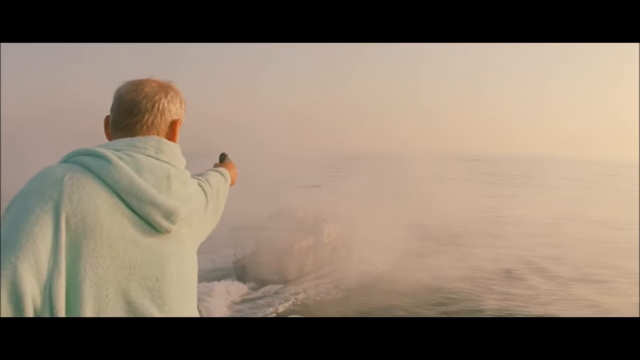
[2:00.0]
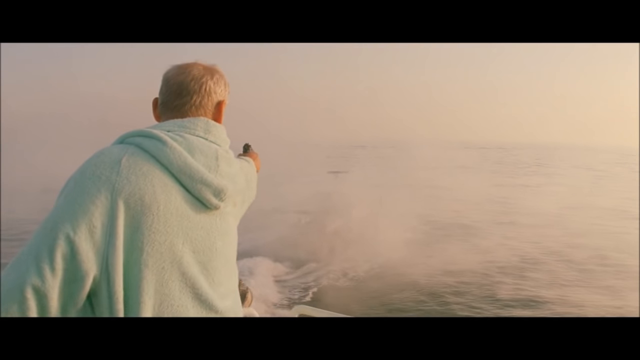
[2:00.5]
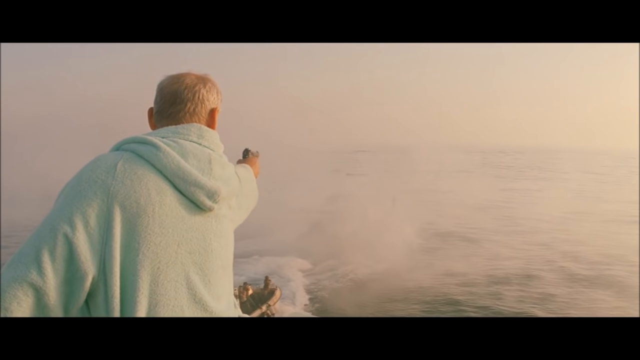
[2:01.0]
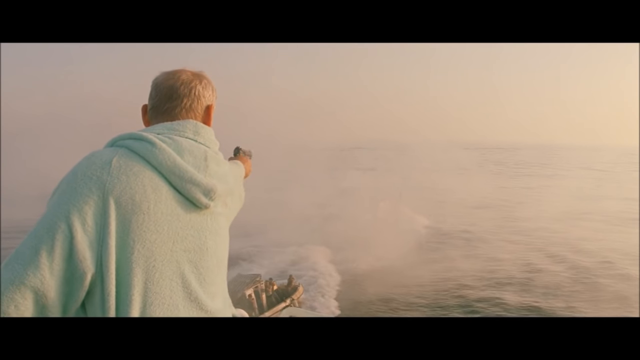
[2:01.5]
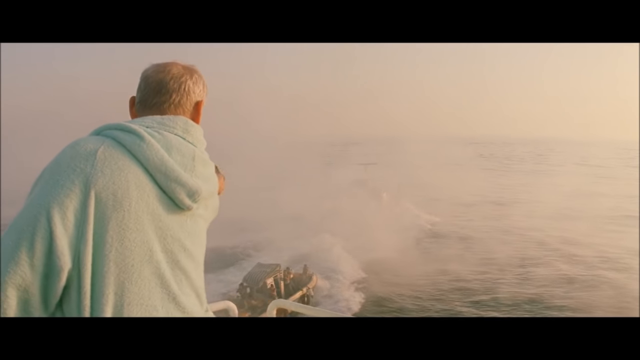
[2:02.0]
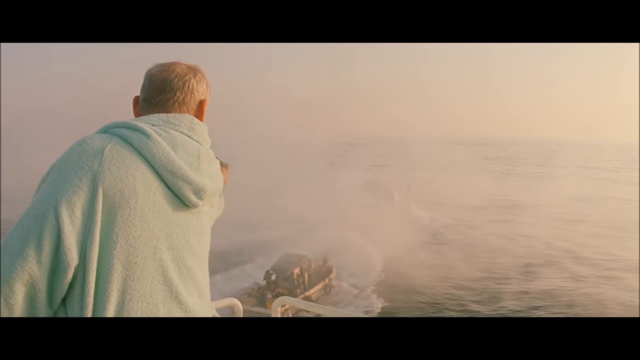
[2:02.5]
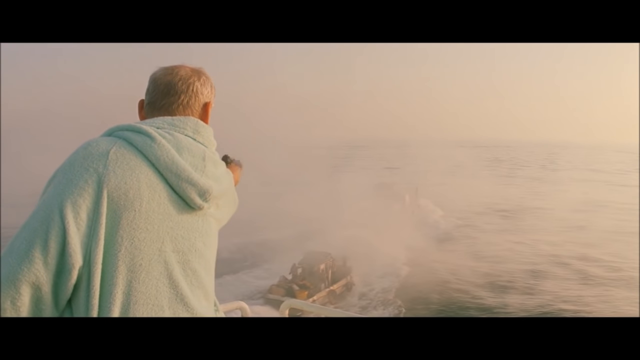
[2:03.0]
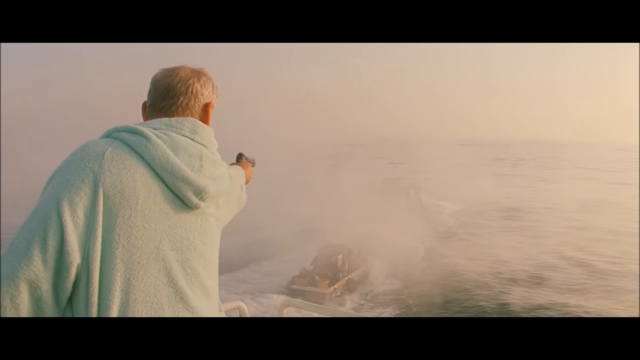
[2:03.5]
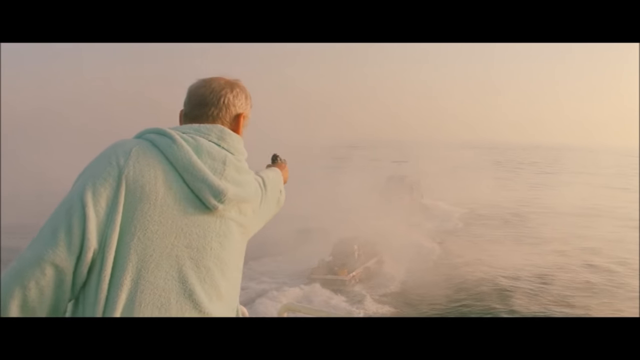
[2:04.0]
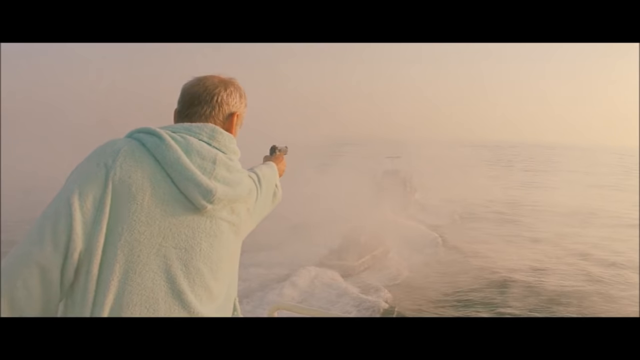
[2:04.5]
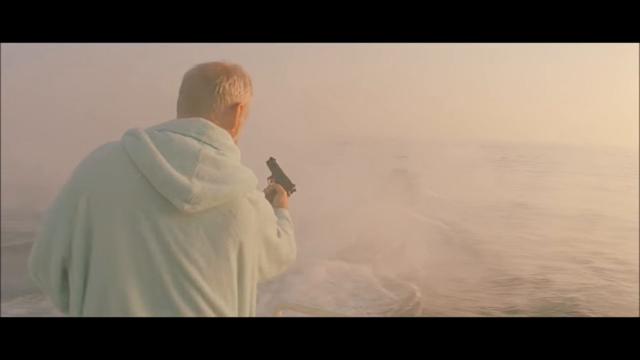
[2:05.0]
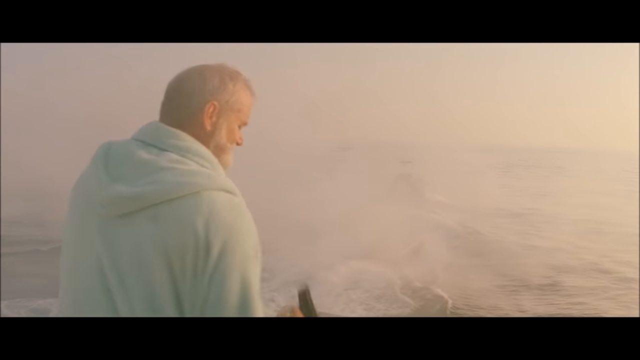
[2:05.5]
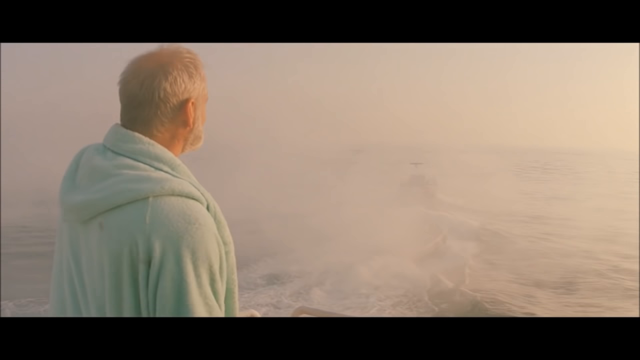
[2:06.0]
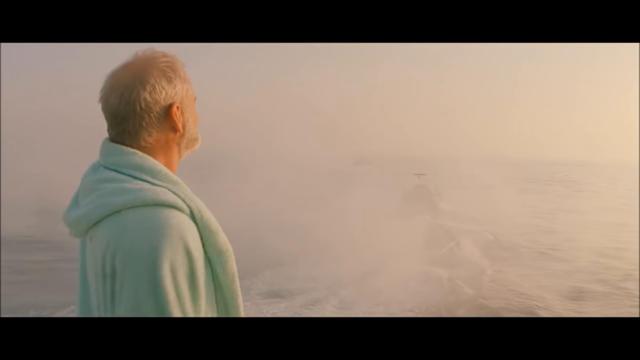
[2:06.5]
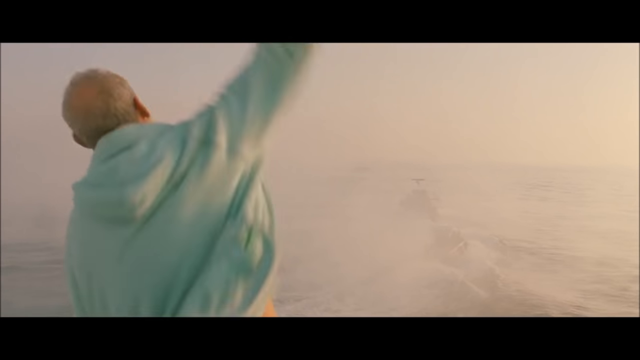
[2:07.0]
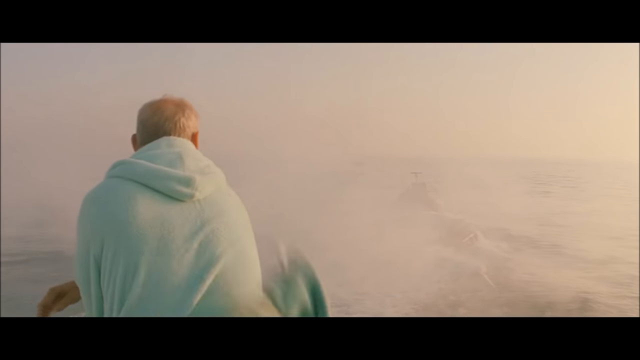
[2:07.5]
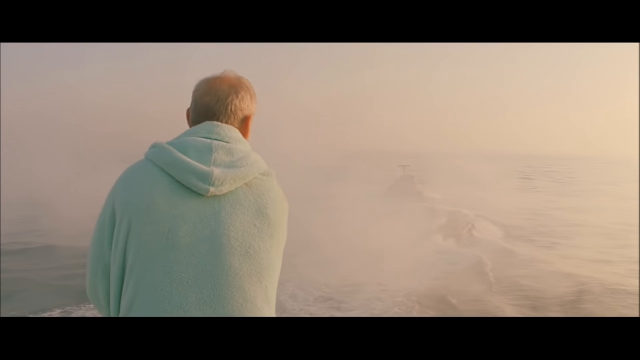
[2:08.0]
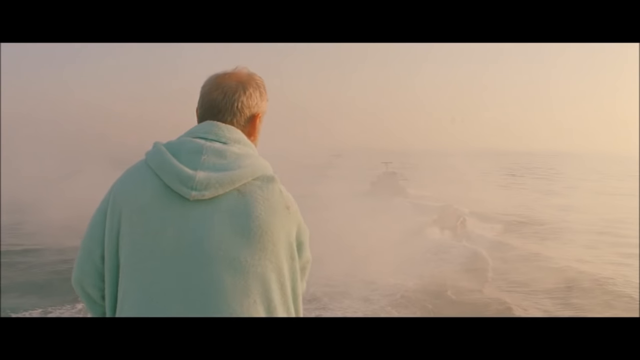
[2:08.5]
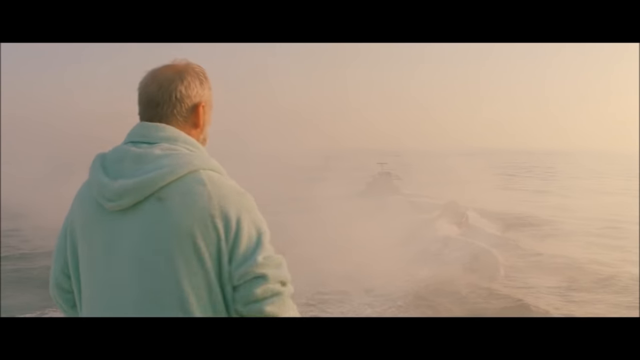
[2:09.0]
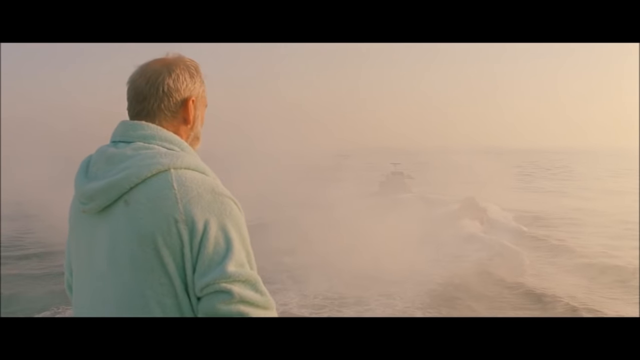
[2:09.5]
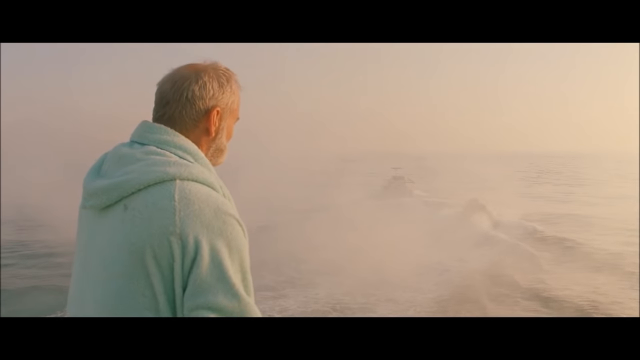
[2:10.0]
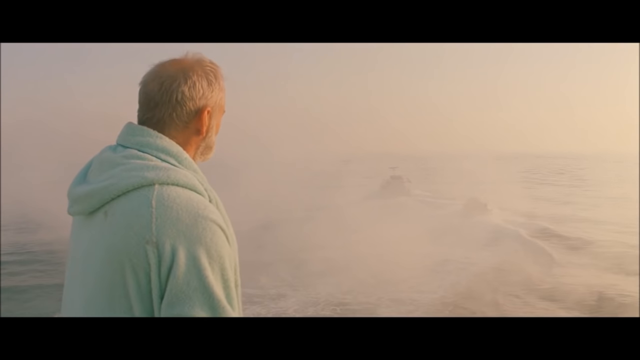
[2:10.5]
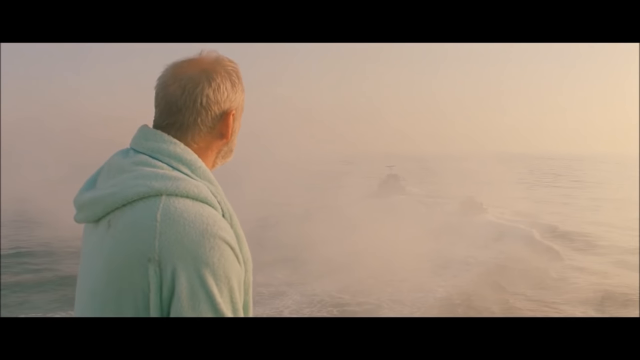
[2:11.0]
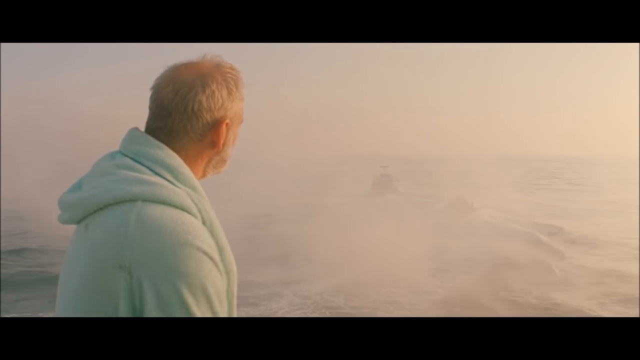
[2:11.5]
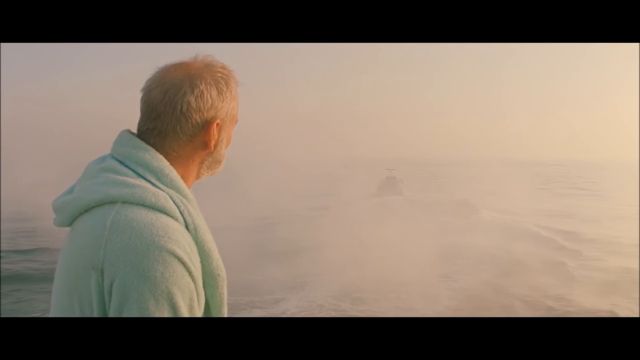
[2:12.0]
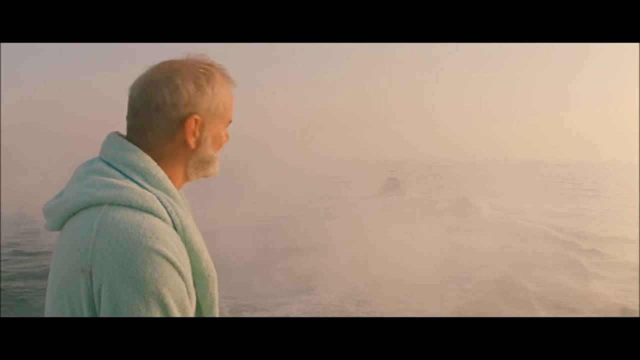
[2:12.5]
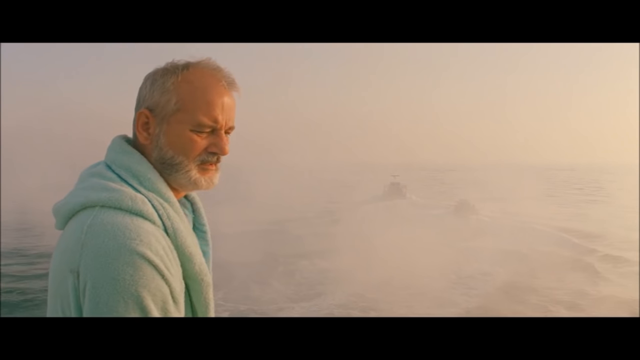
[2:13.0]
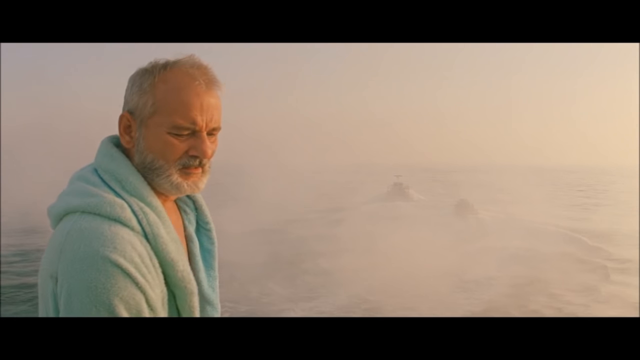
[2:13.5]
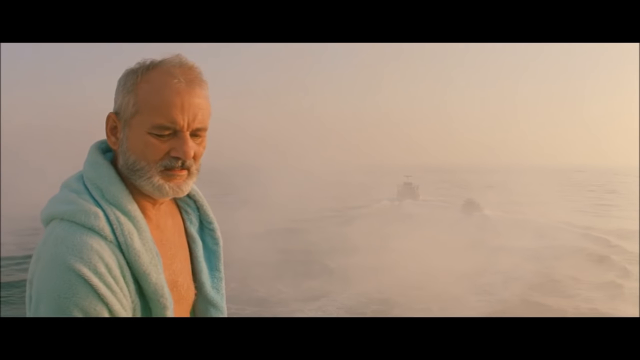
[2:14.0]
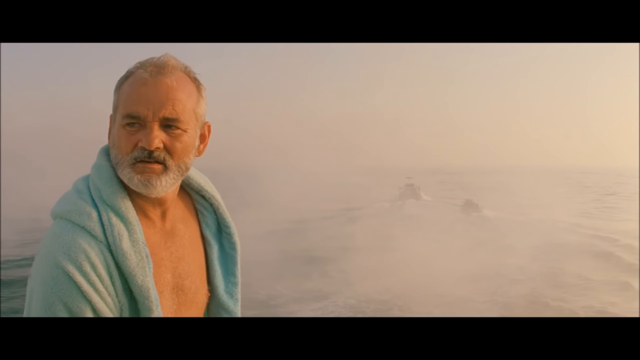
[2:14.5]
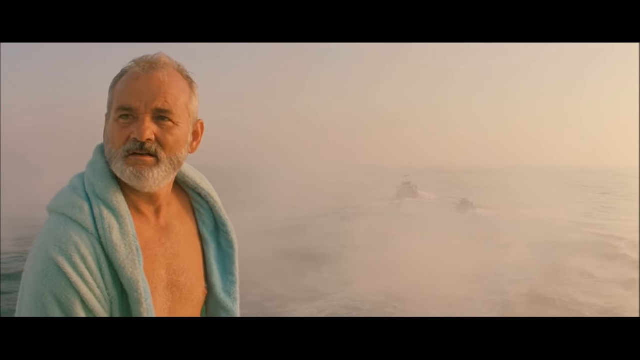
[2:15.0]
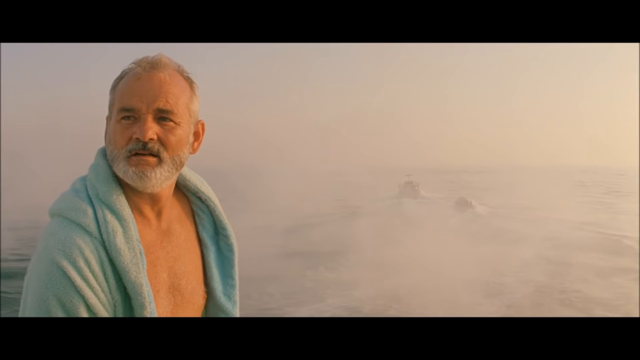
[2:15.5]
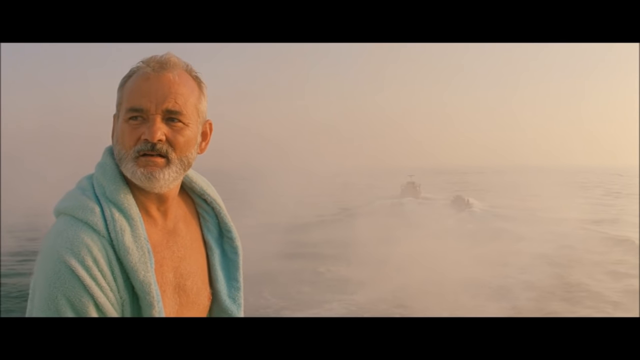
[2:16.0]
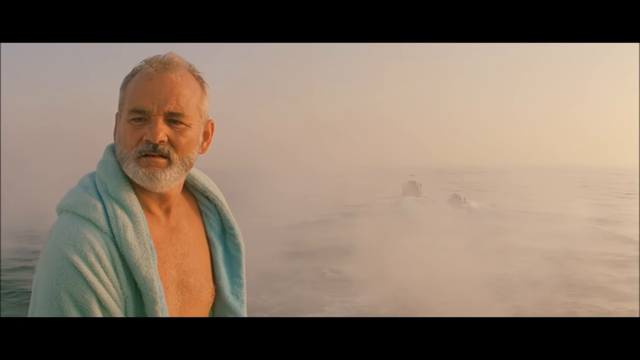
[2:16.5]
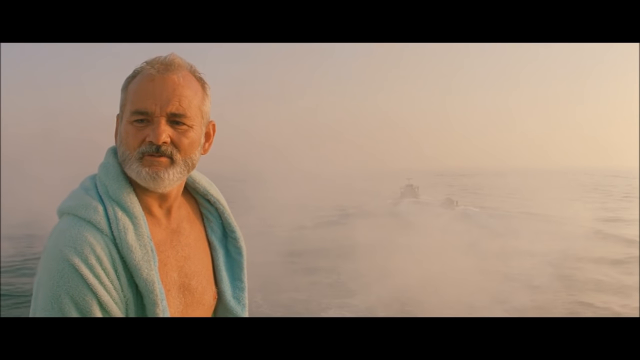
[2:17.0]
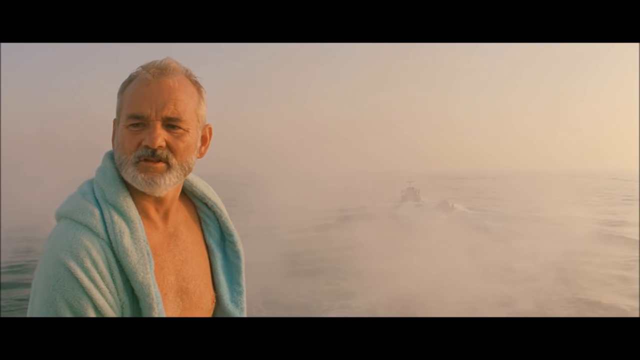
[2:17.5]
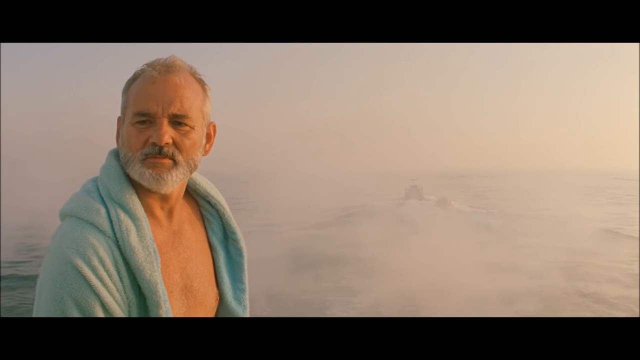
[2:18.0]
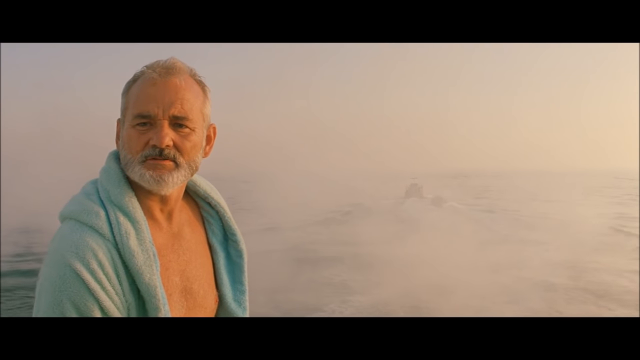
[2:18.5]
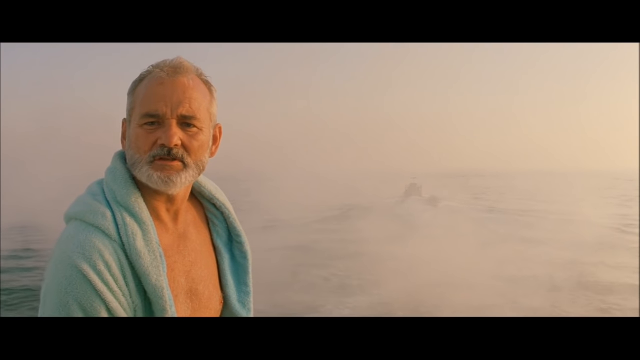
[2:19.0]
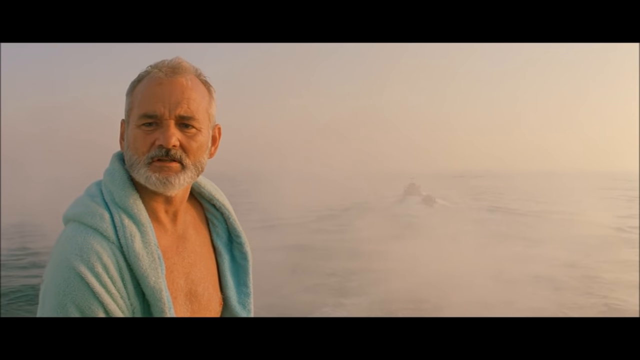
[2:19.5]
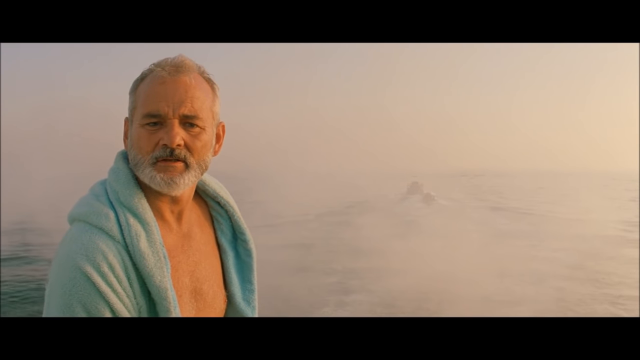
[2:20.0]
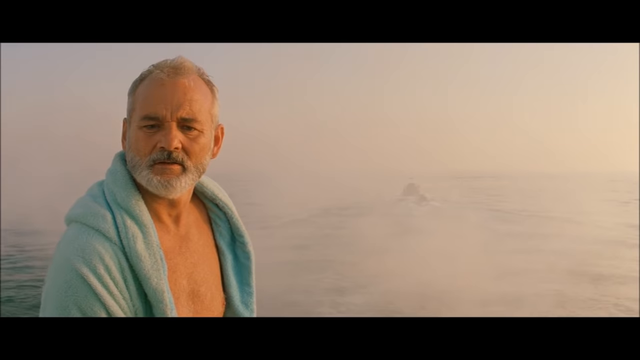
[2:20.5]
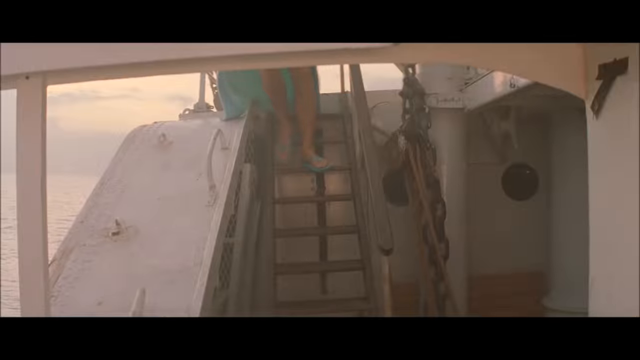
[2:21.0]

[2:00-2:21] Bill Murray is seen from behind in a light blue robe, pointing a gun at another boat that is moving away from his ship through the ocean. He fires the gun 4 or 5 times and then seems to run out of ammunition; he looks at the gun and ends up throwing it into the water as the other boat keeps moving further away. He then turns toward the camera with a look of sadness, maybe disappointment. There is nothing under his robe, at least on his upper body, as his chest is revealed. He looks to the front but not toward the camera and continues to speak, with a look that also seems to show some mild disconcertment besides anger.